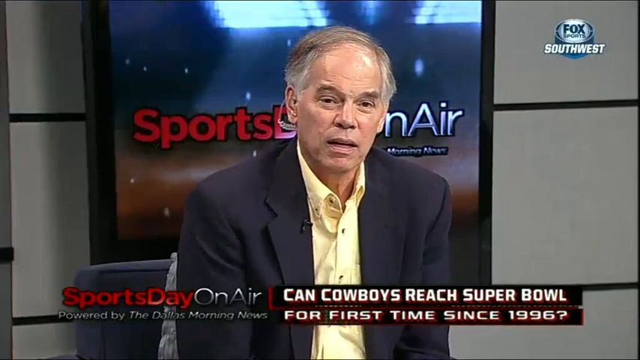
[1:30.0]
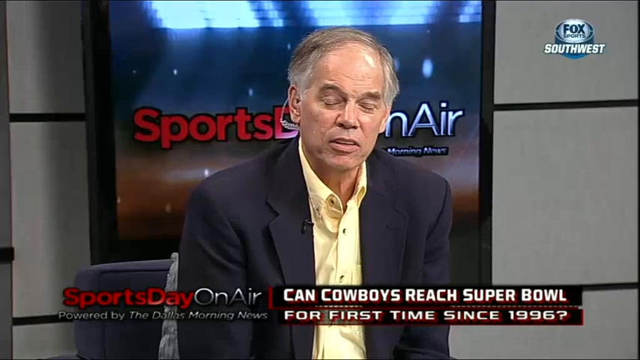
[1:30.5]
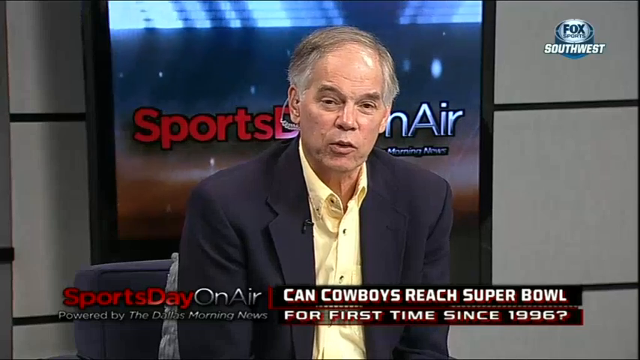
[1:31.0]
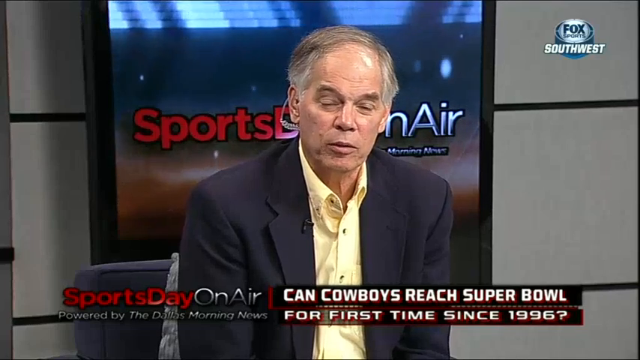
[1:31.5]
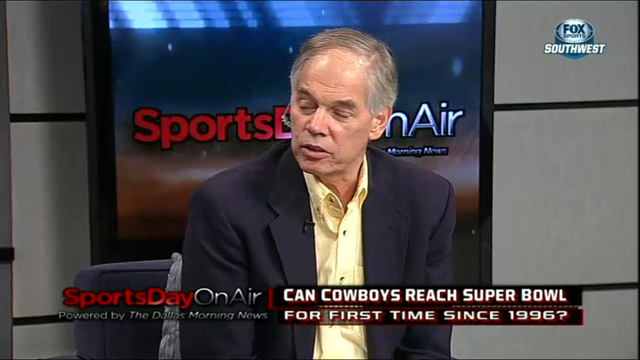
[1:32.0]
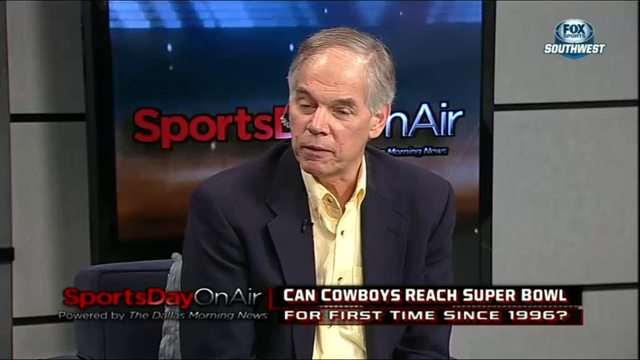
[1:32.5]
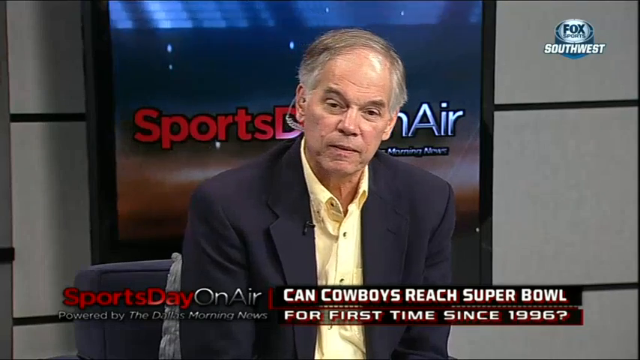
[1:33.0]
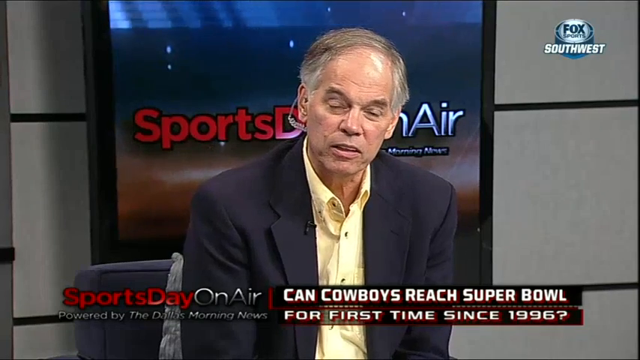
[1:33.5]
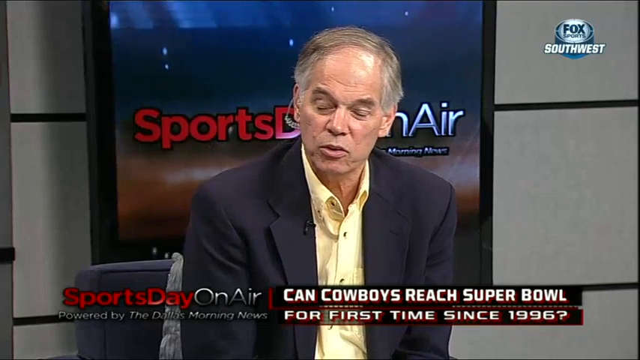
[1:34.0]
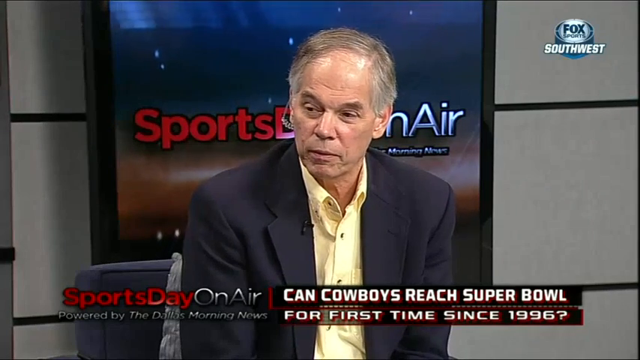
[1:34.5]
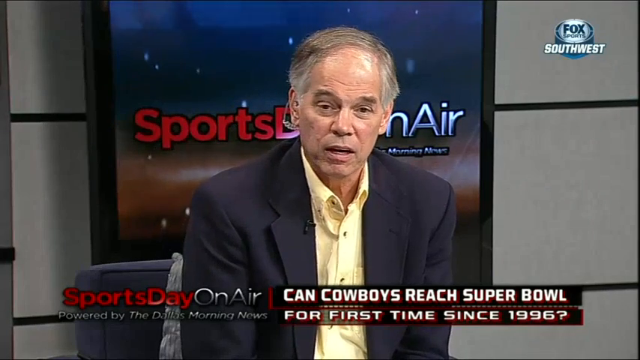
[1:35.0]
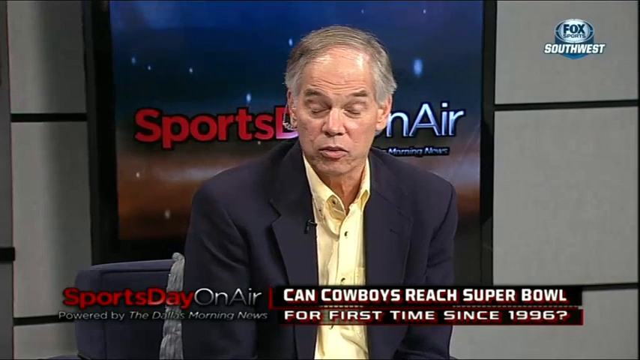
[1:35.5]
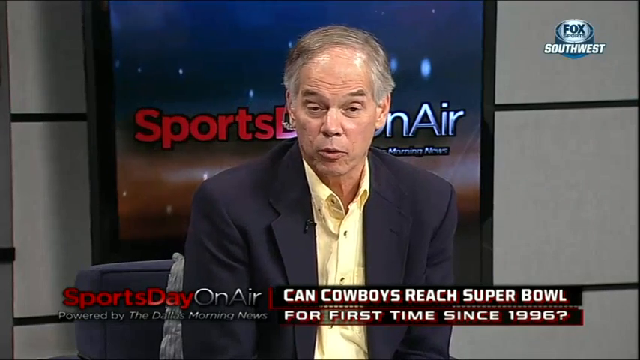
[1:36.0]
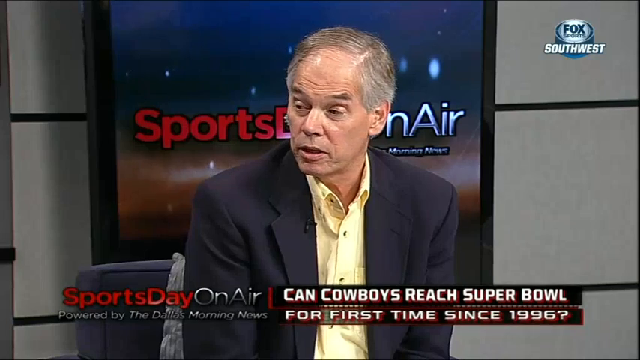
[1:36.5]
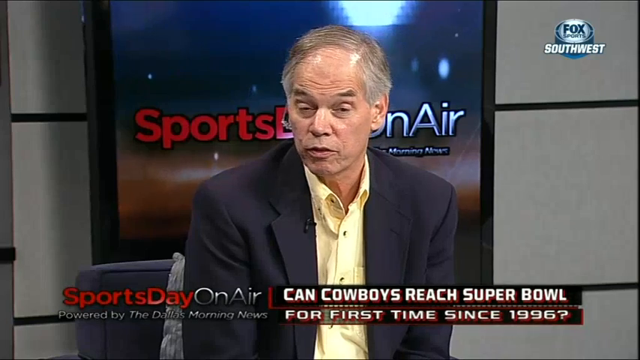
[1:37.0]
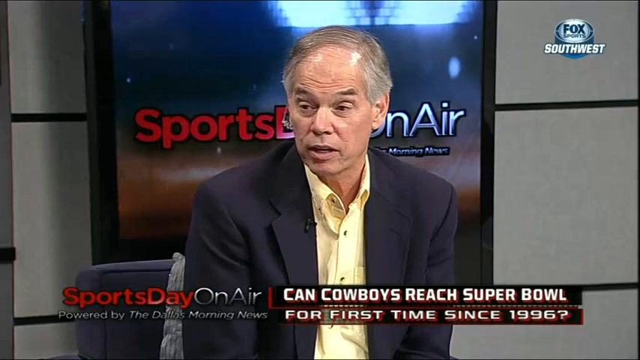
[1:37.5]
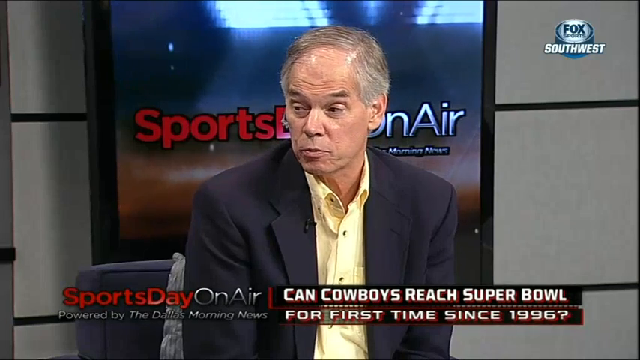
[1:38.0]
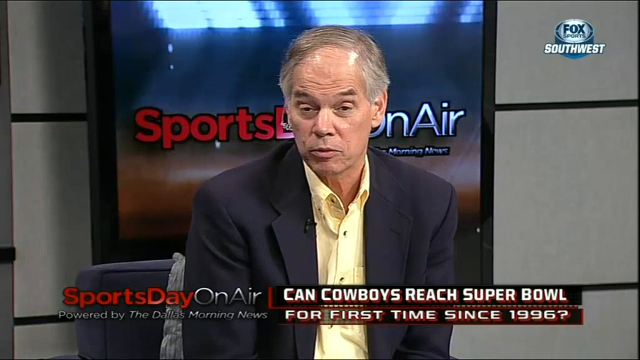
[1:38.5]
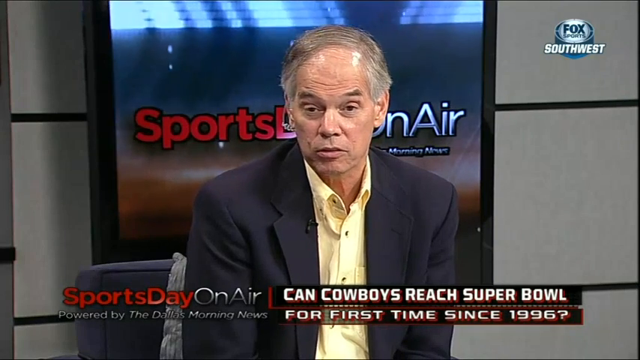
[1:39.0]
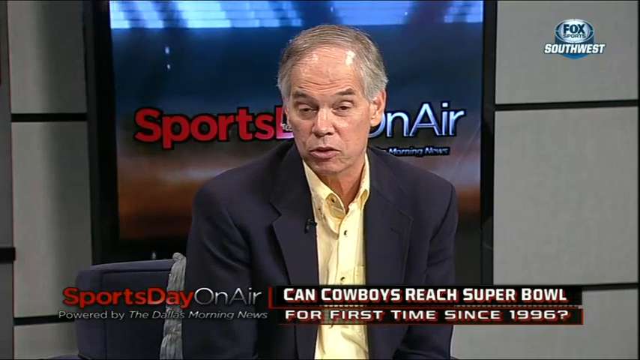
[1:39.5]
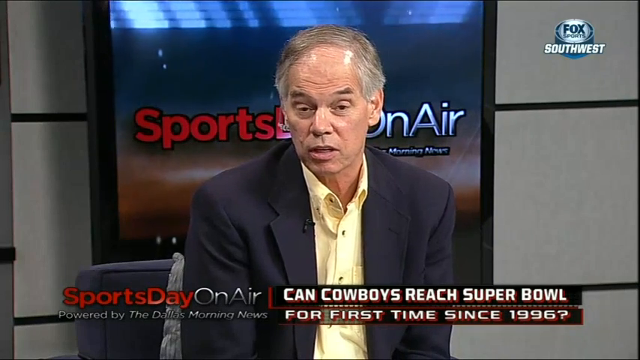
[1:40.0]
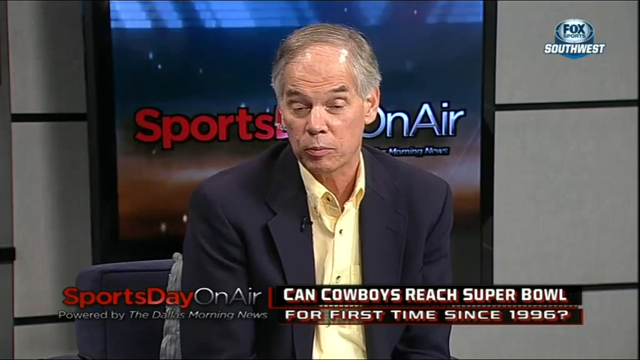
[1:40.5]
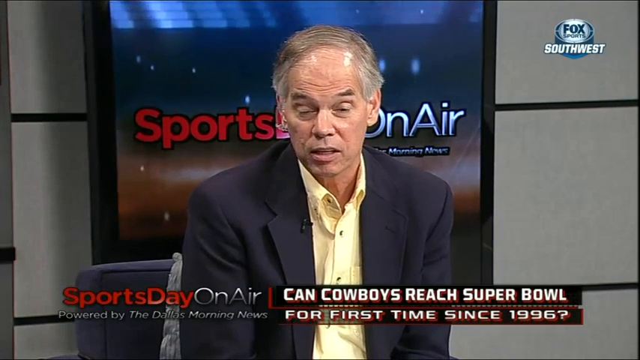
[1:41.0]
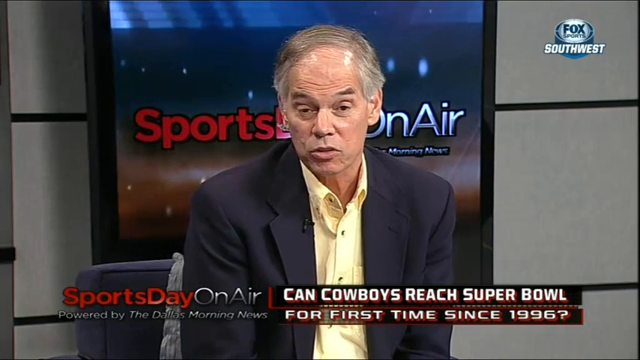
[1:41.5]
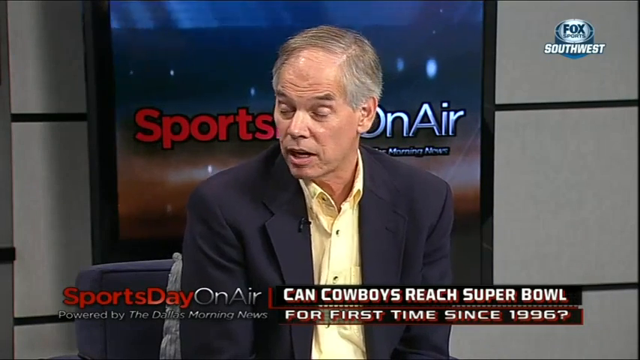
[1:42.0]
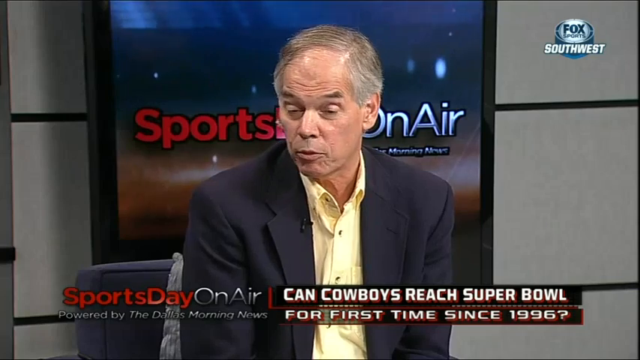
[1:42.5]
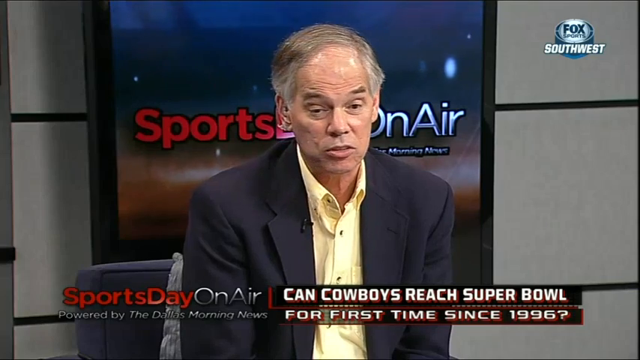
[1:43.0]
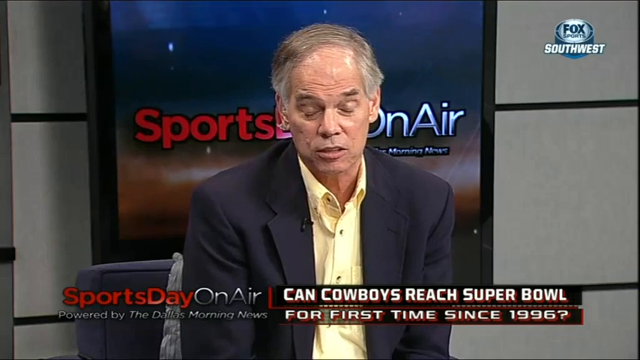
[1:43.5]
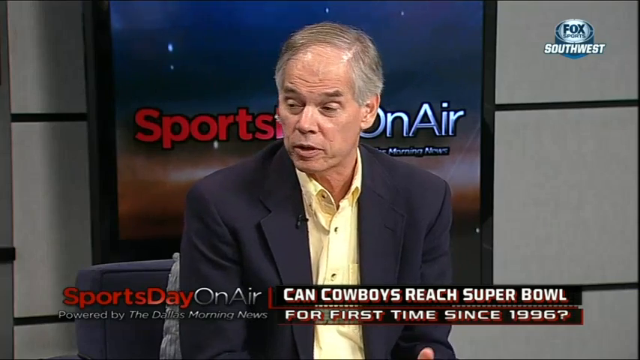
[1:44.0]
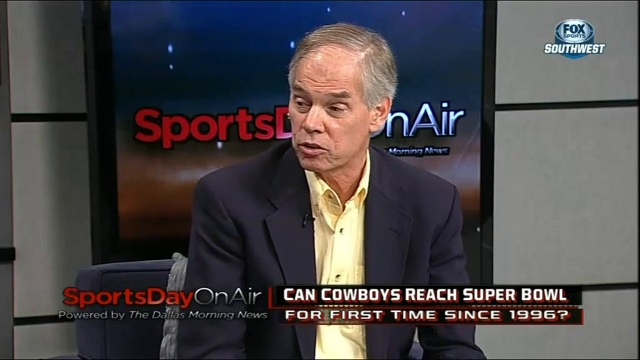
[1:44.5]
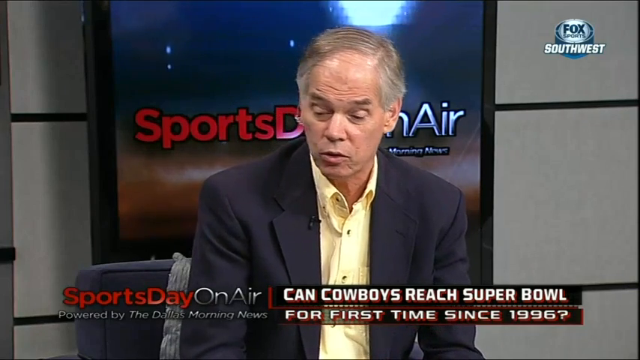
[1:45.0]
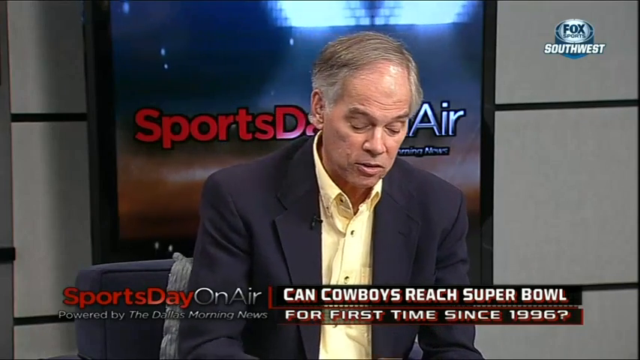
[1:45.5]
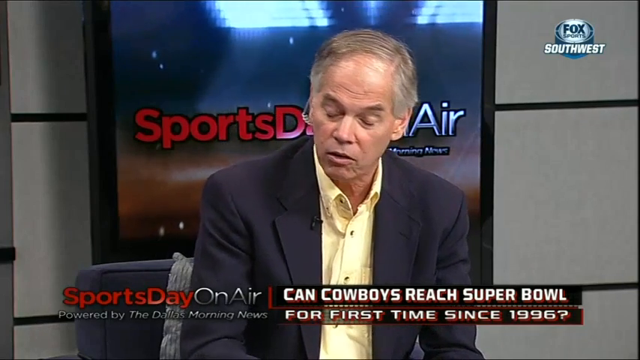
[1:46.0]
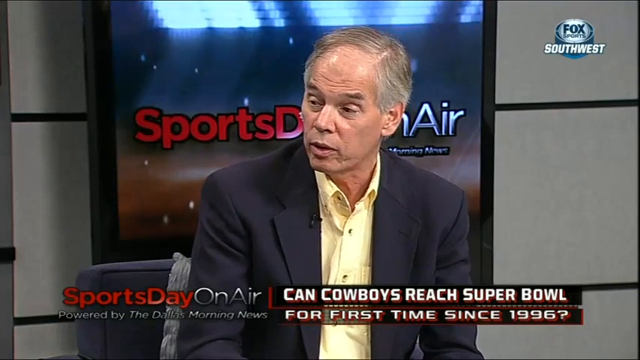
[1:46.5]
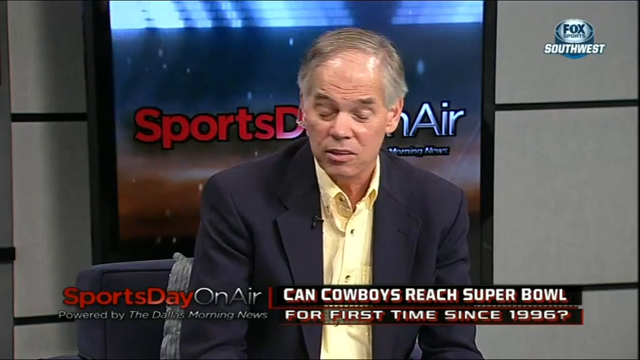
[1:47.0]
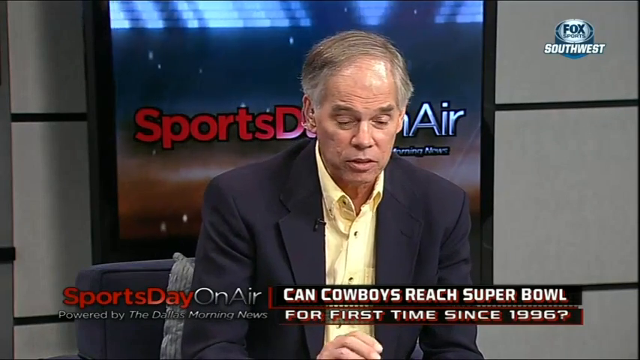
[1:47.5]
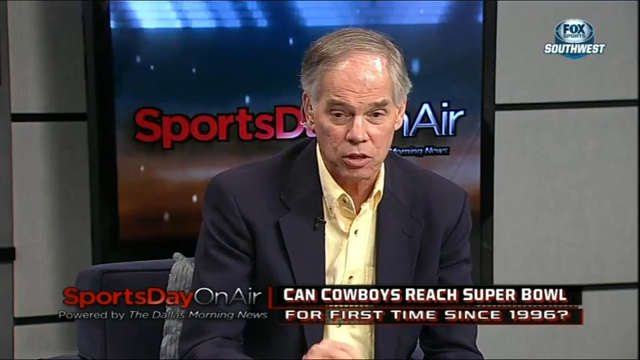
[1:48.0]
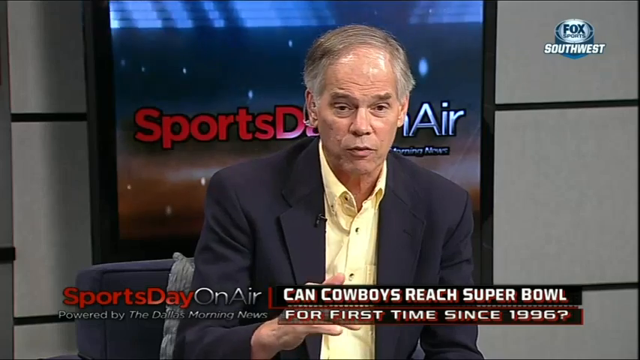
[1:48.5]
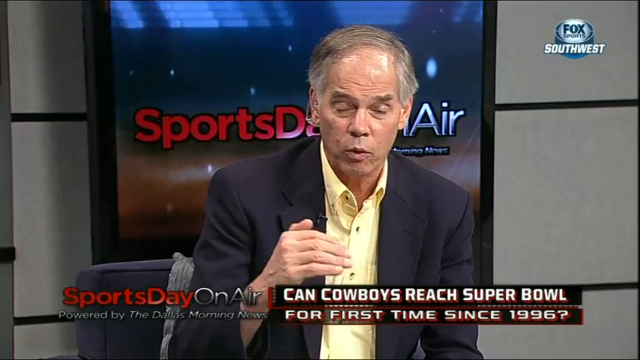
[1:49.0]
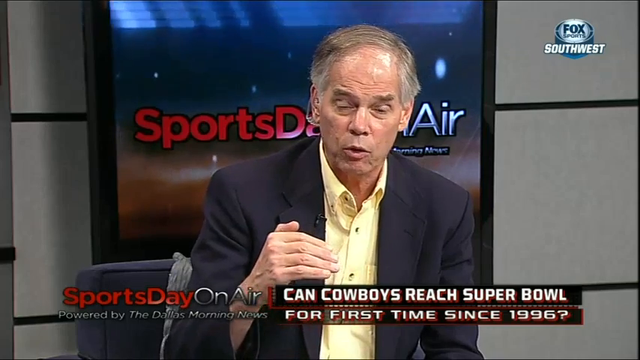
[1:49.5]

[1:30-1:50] The man in yellow is talking, with a kind of calm look on his face; his eyebrows and forehead move a bit. His yellow shirt has a chest pocket on the left side. The caption changes to read "Can Cowboys reach Super Bowl for first time since 1996?" Looking closely, what looks like a clear coiled wire comes down from his right ear, maybe his mic, and a mic is attached to the collar of his suit jacket. He looks very engaged in the conversation. In the background, the Sports Day On Air logo replays on a screen, with what look like stars moving around and a kind of bronze color, perhaps a blurred-out sunset. At the top of the monitor, lights move from the middle out to the left and right sides simultaneously.